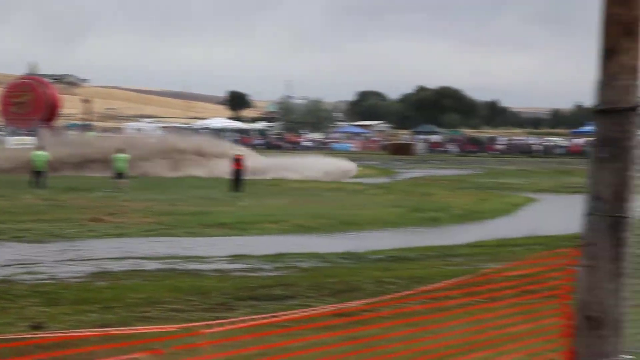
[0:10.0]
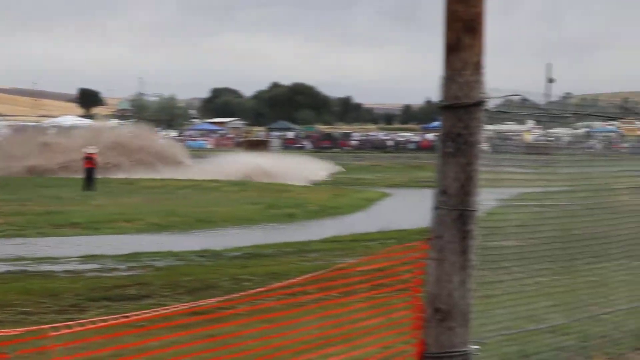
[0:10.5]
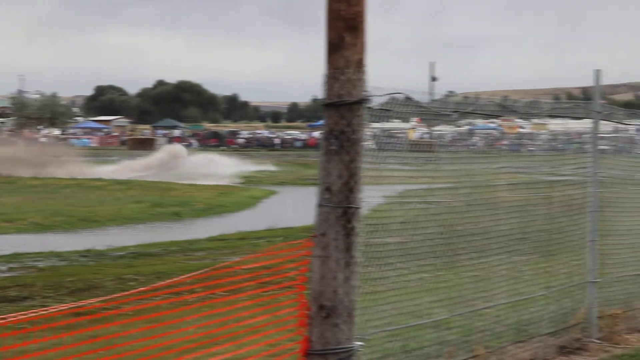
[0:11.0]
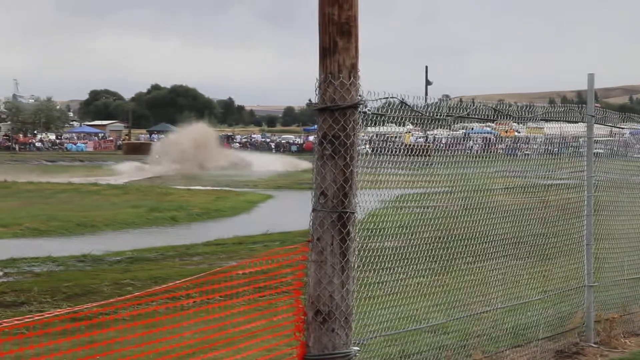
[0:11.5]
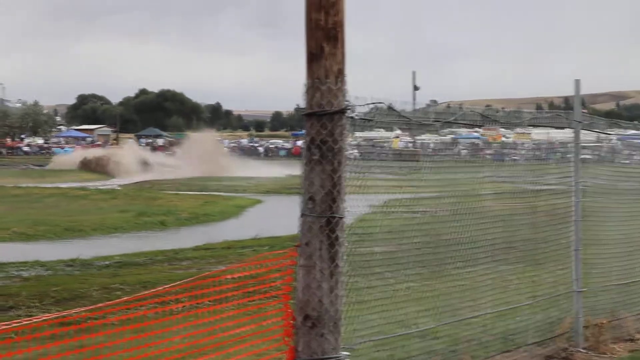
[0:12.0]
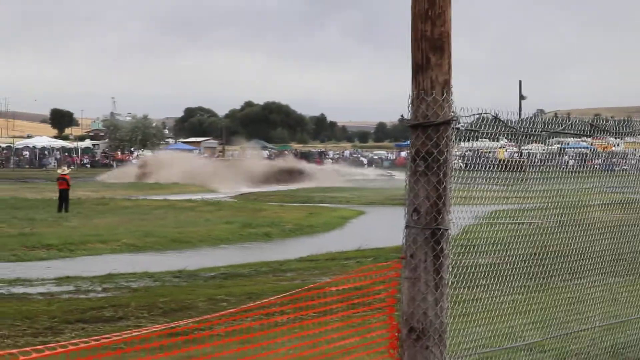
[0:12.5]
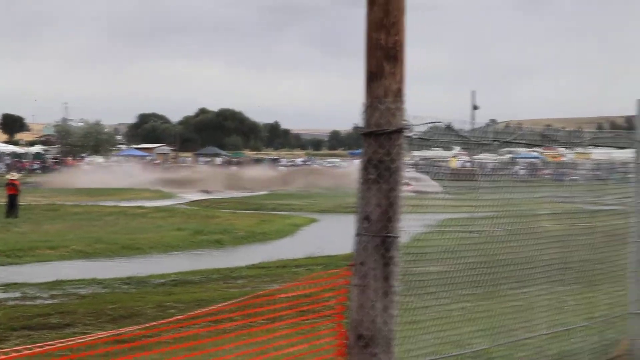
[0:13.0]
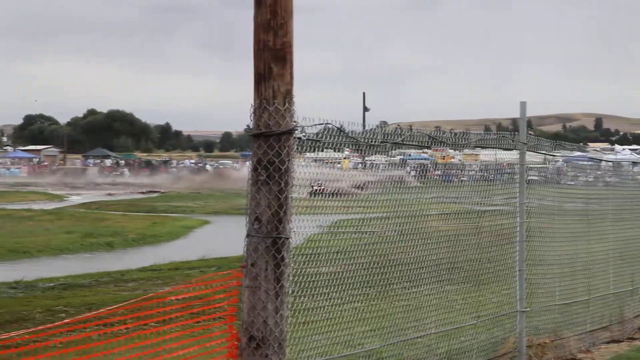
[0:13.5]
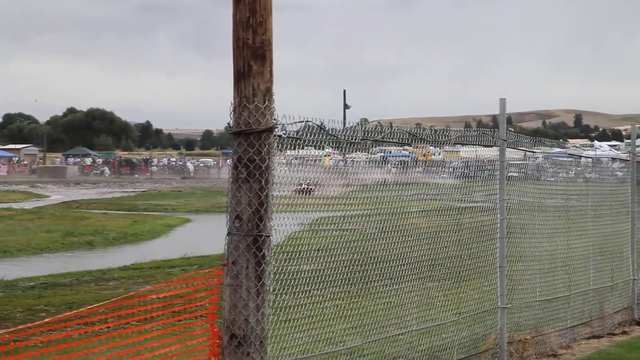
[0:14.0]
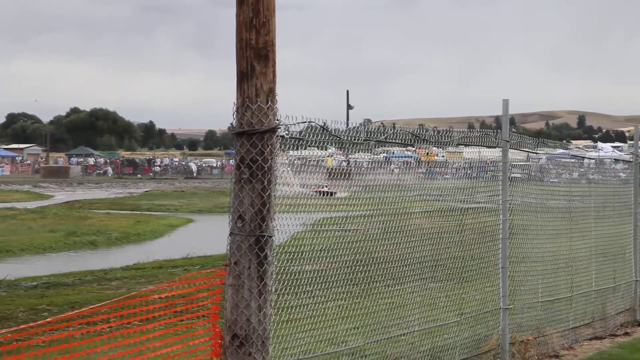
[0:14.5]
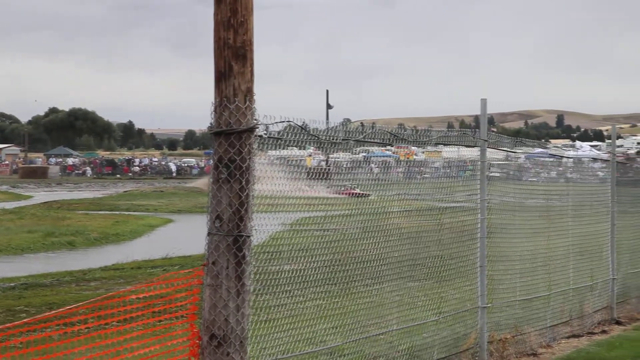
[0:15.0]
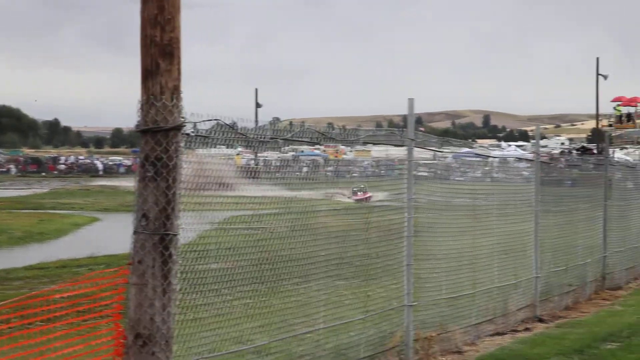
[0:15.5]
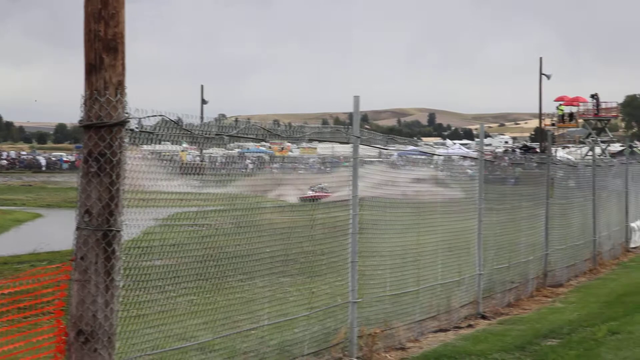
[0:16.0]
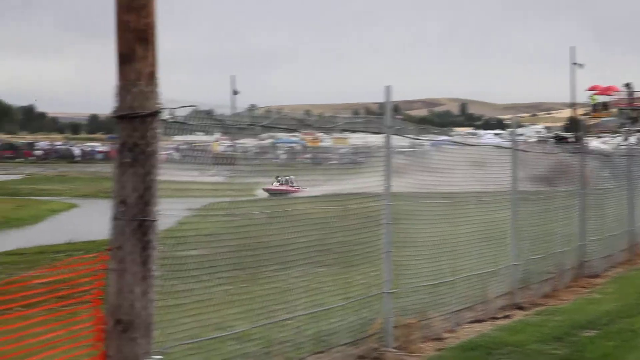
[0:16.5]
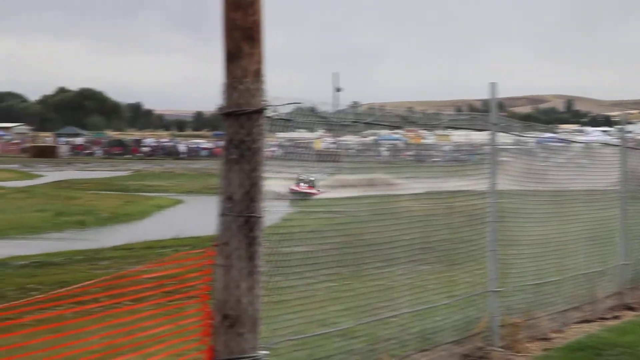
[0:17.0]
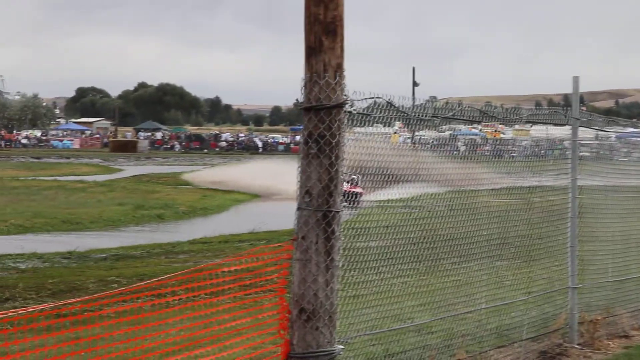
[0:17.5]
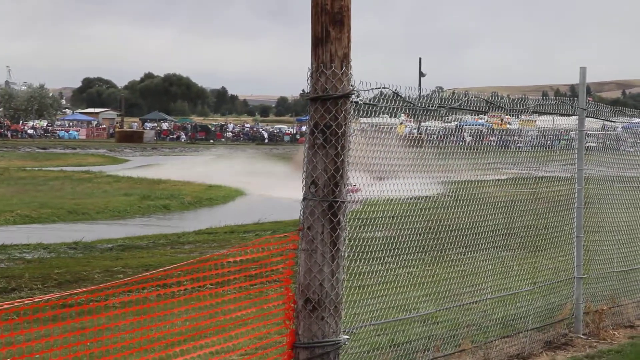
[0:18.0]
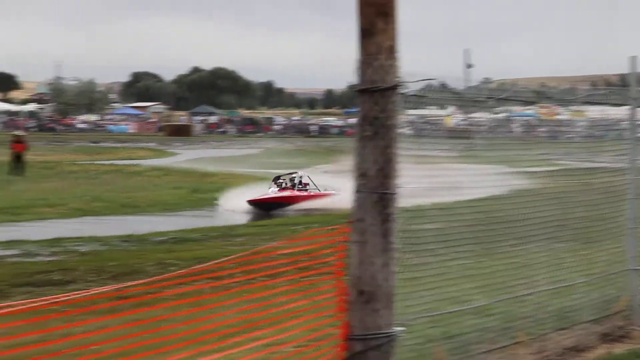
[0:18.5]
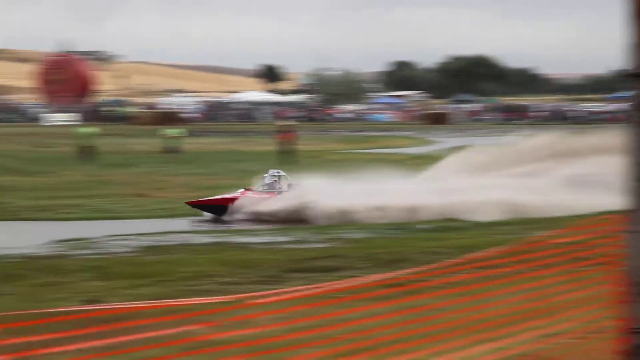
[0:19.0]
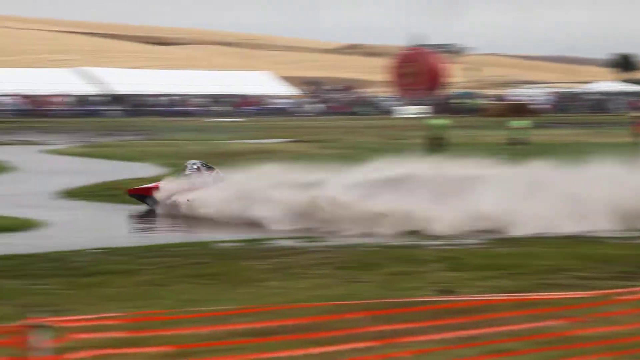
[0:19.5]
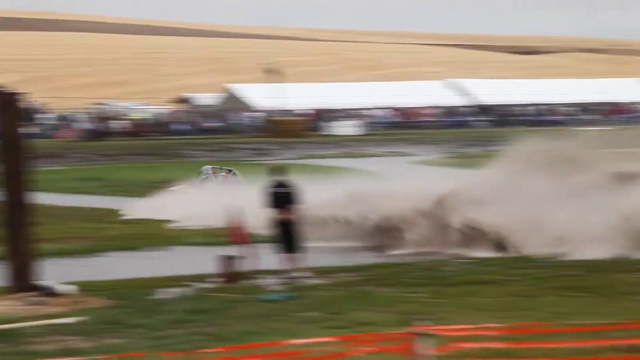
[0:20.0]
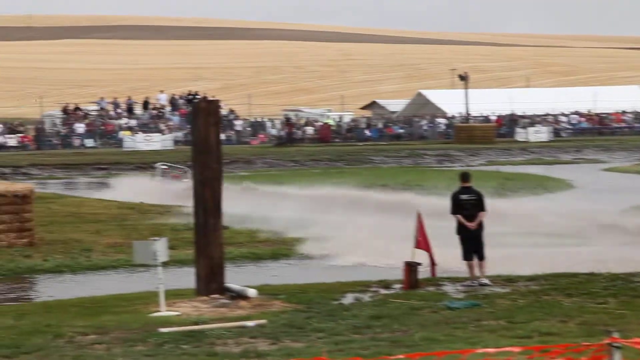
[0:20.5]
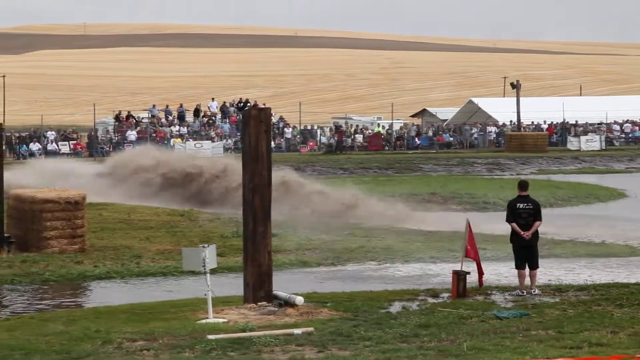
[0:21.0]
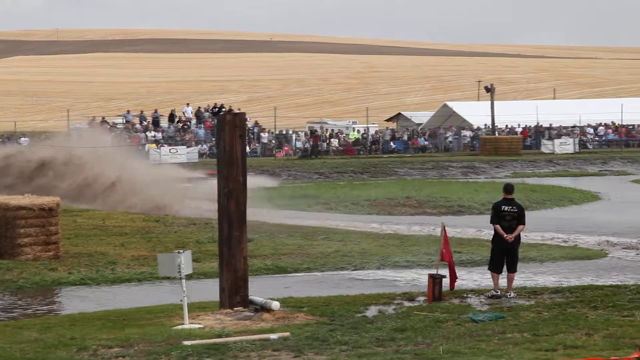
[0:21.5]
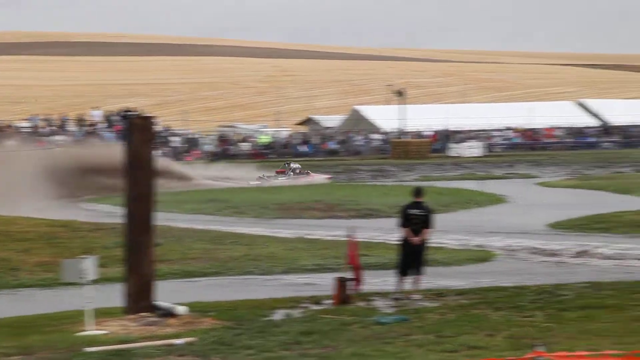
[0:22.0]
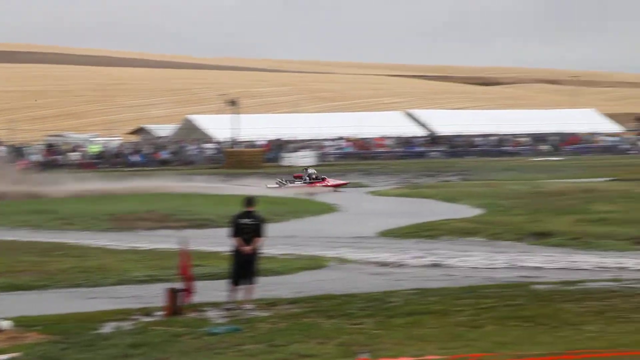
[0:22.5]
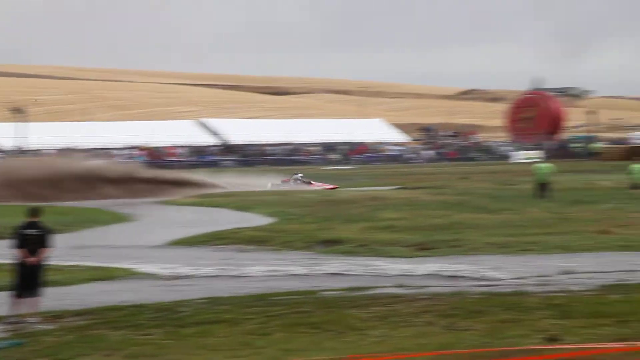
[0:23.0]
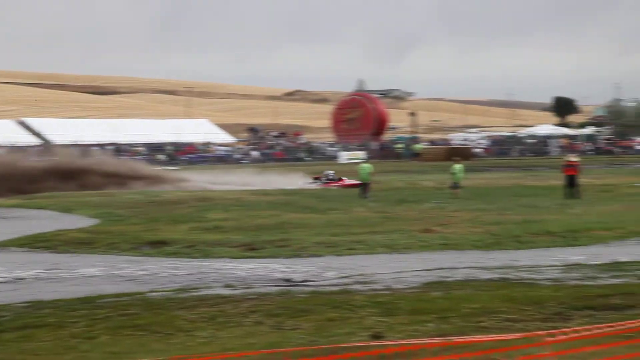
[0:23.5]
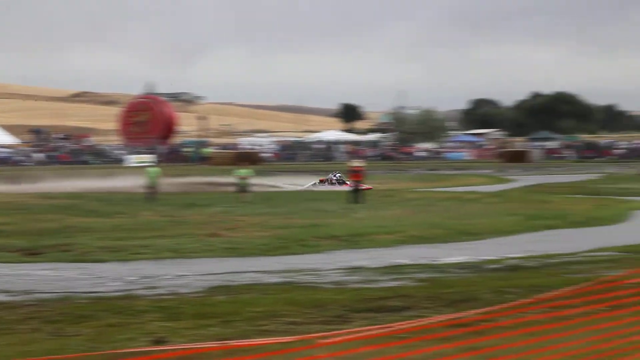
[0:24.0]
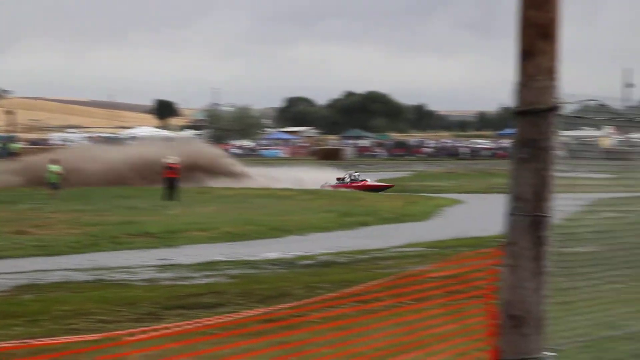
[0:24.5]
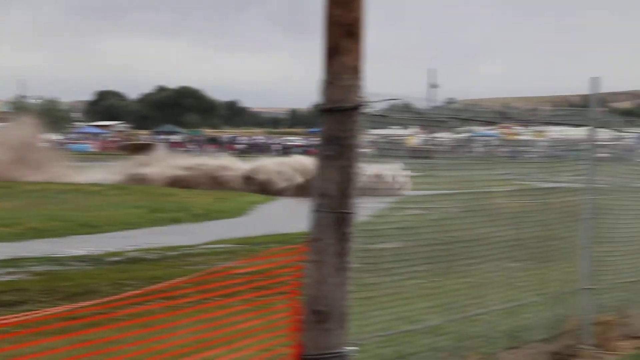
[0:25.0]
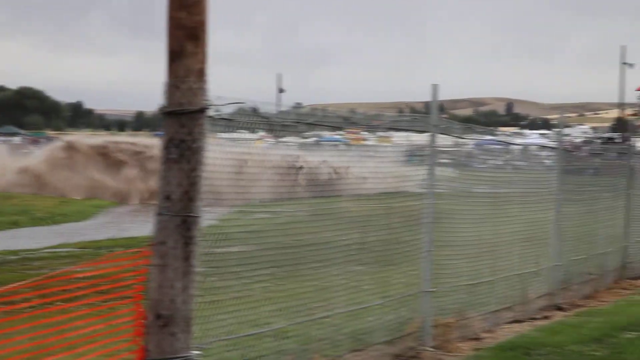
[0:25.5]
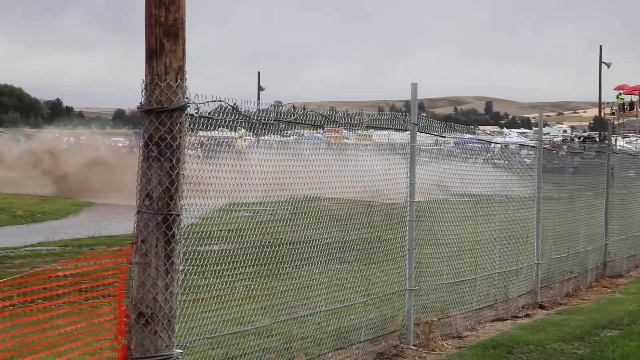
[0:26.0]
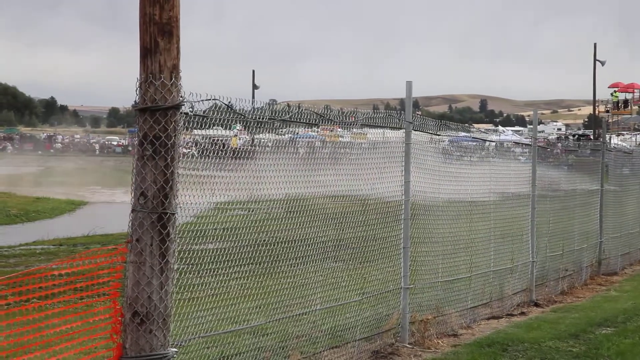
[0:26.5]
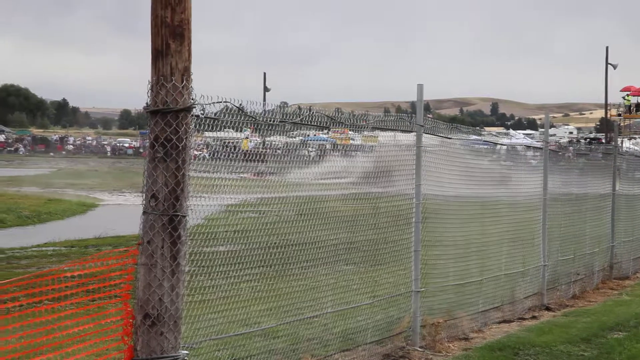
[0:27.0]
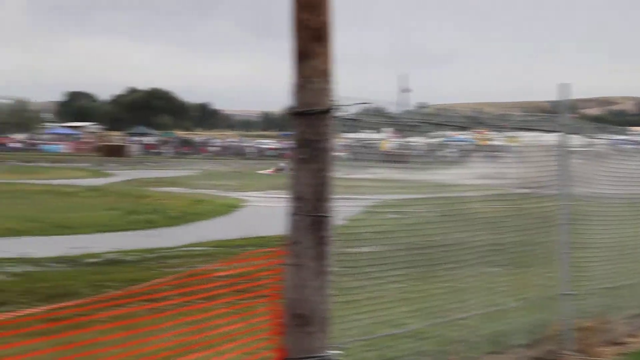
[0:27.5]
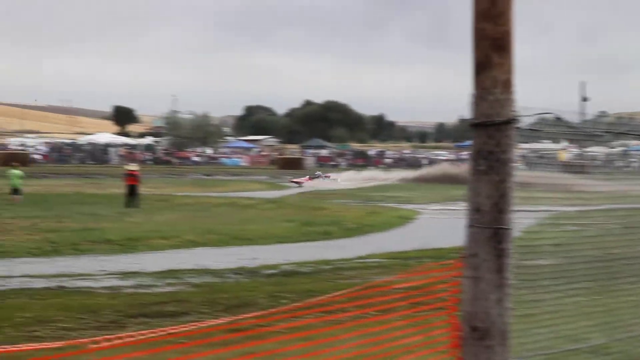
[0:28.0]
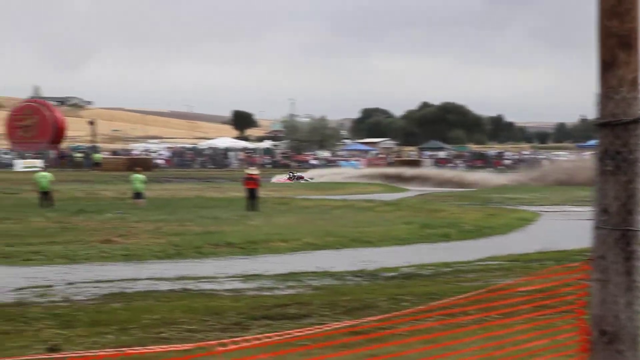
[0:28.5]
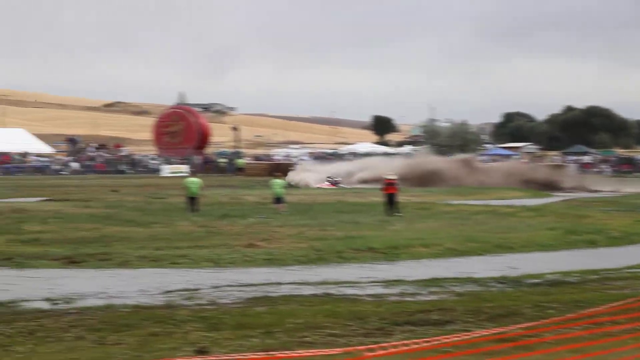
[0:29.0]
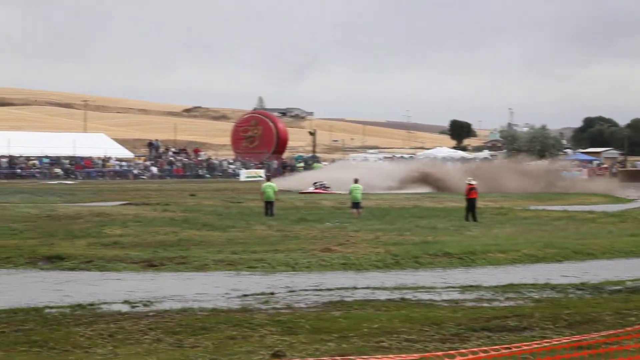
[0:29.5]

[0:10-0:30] A wider shot shows the overall course, a series of channels, inlets and narrow waterways. It appears to be a man-made course, self-contained behind fencing. Lots of race marshals are dotted around the course, standing on islands and watching the boat as it continues to speed through the inlets and channels, displacing a large amount of water behind it. The grass around the water is a lush green, and on the other side of the course there are several other buildings, tents, vehicles and spectators. A large red circular structure is in the background, and what looks like fields and trees are behind the main structures at the back of the course. The boat travels at extremely high speeds, over 100 miles an hour.